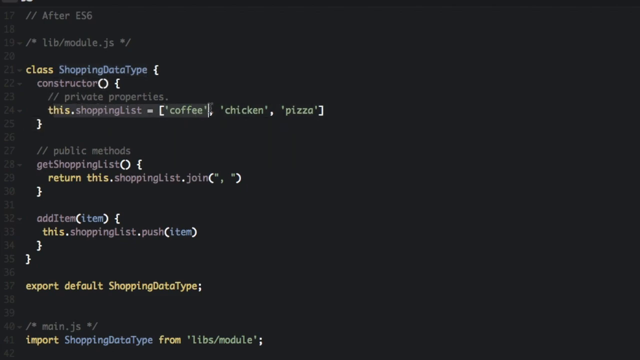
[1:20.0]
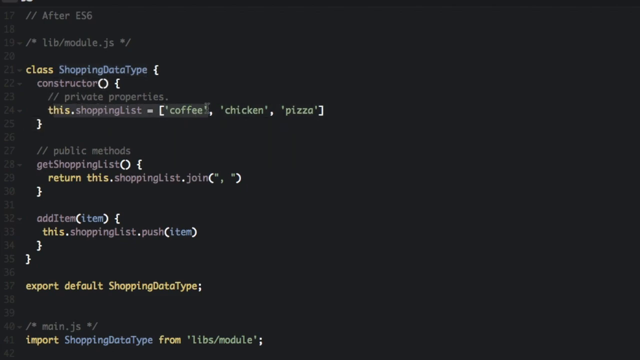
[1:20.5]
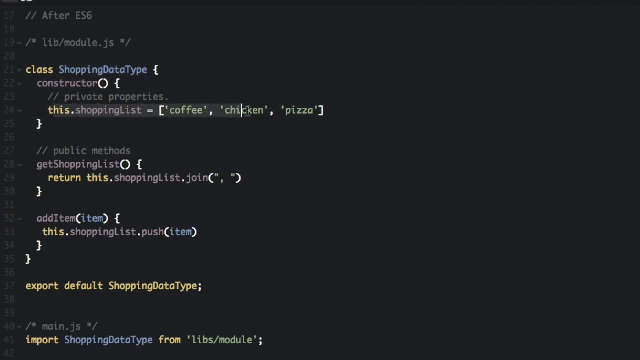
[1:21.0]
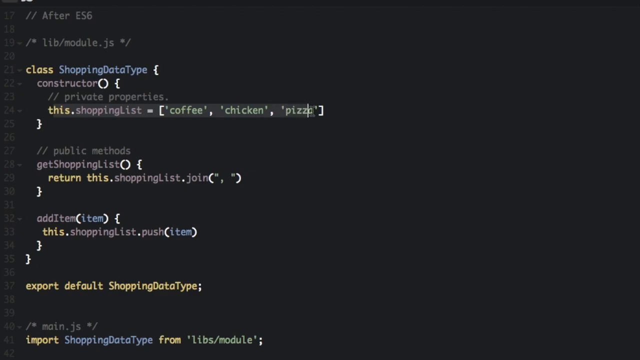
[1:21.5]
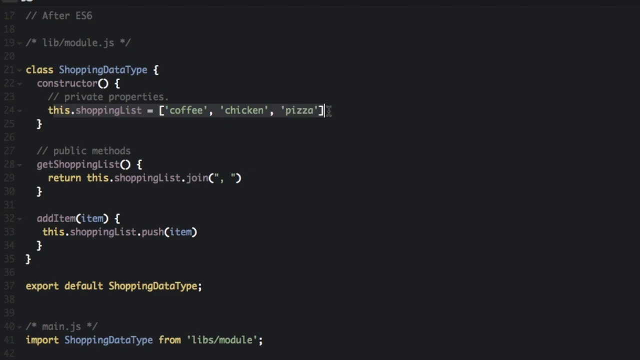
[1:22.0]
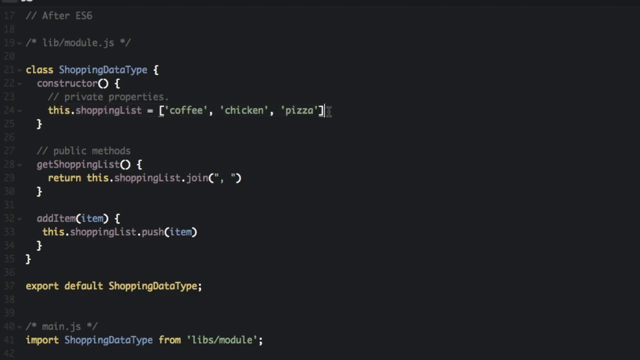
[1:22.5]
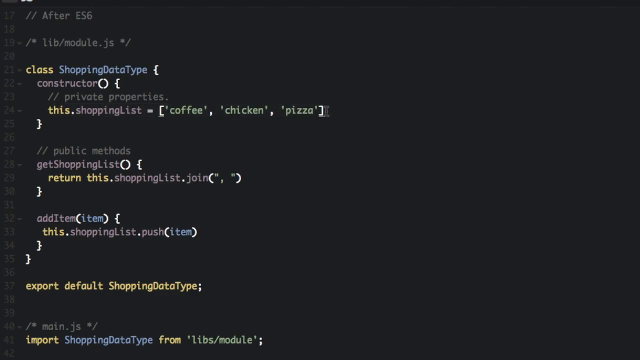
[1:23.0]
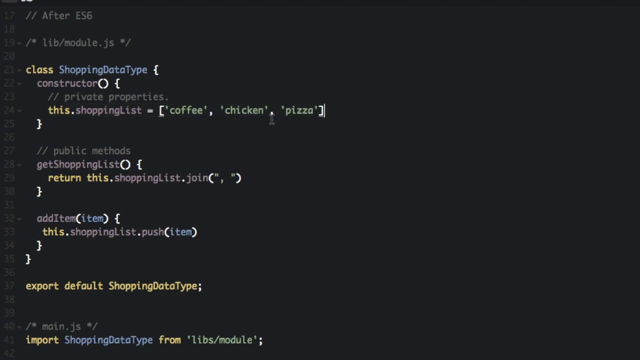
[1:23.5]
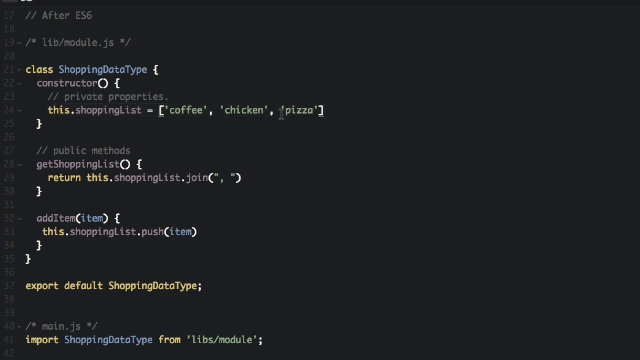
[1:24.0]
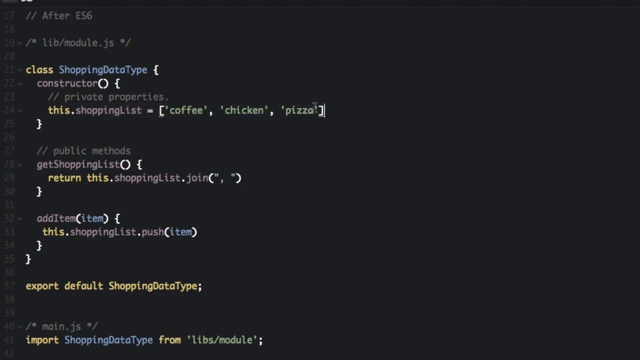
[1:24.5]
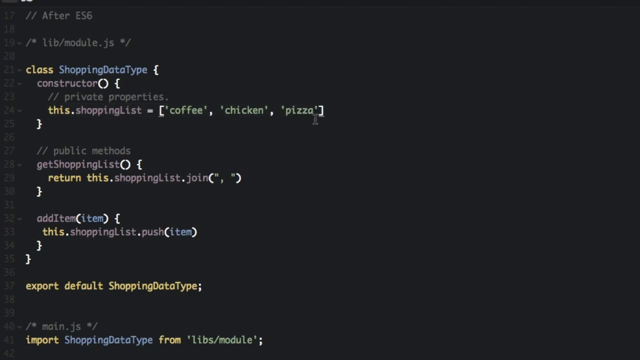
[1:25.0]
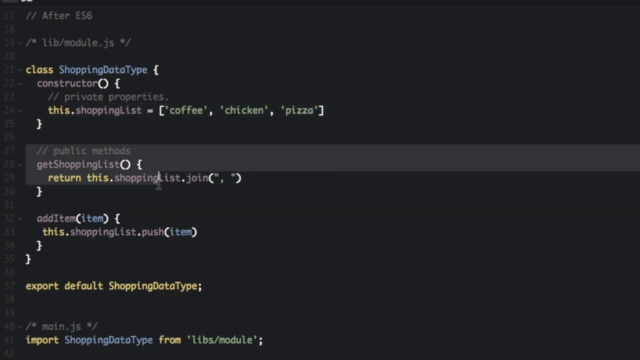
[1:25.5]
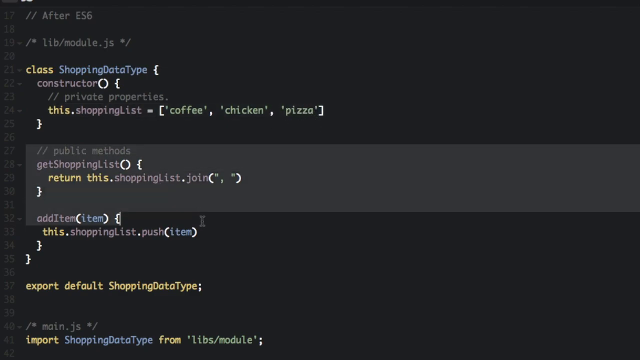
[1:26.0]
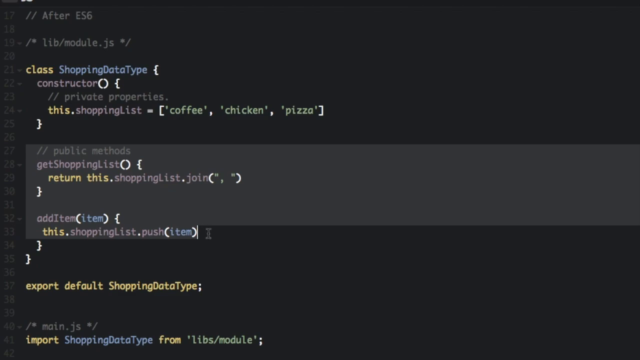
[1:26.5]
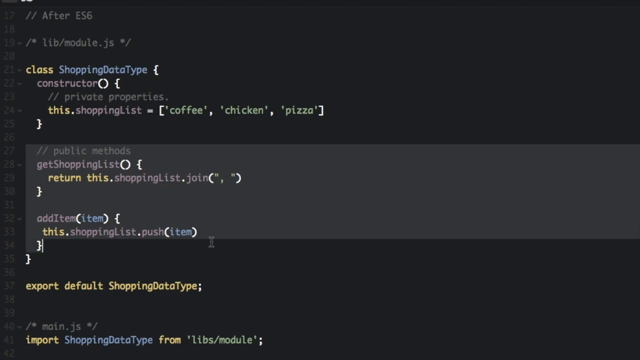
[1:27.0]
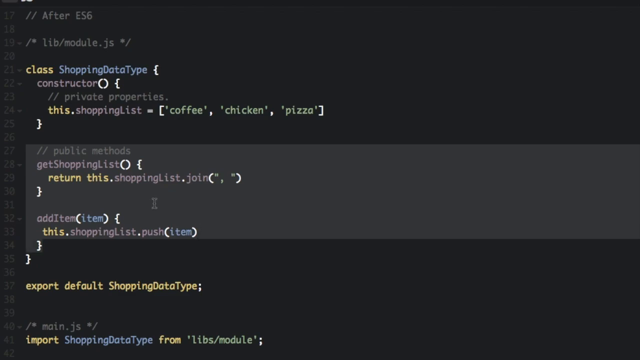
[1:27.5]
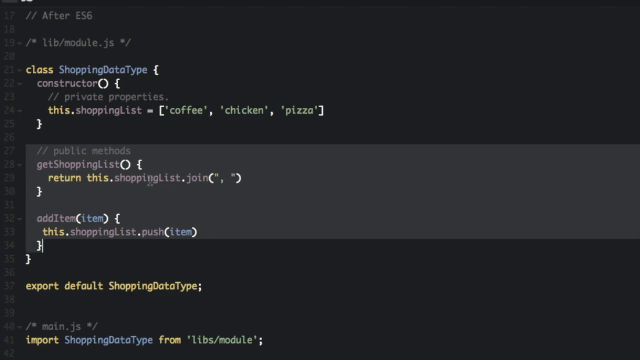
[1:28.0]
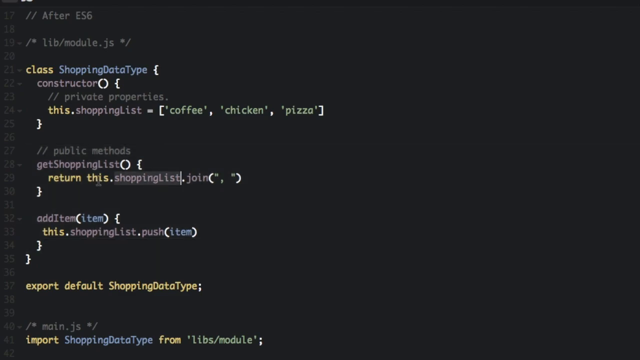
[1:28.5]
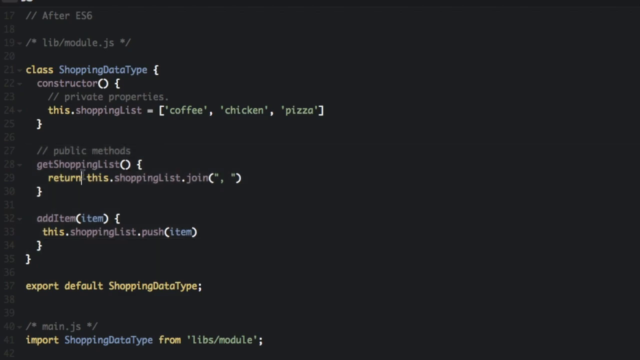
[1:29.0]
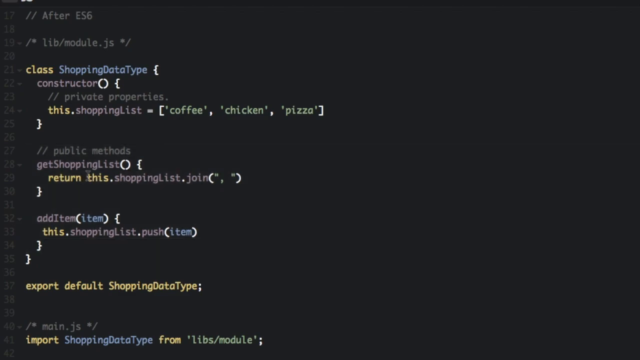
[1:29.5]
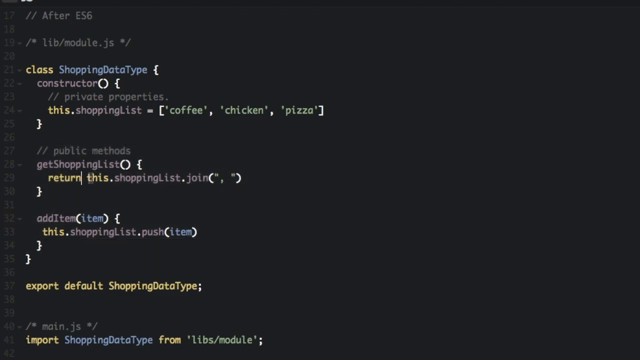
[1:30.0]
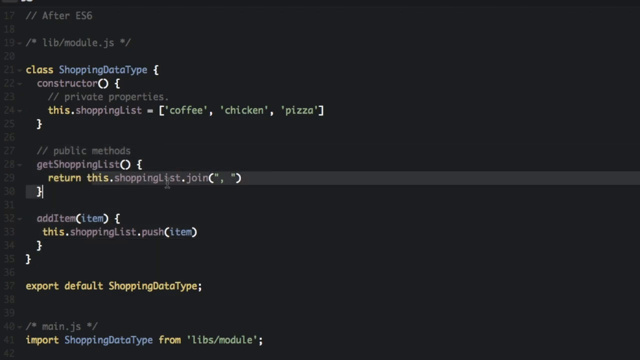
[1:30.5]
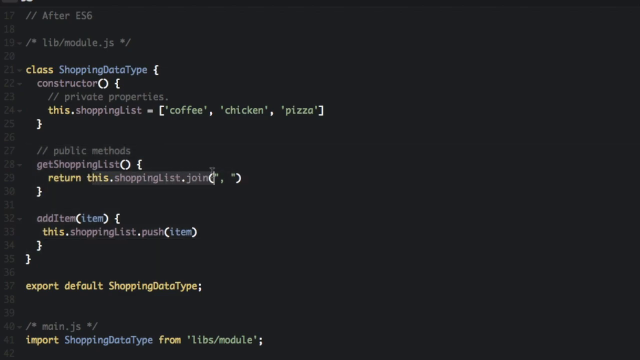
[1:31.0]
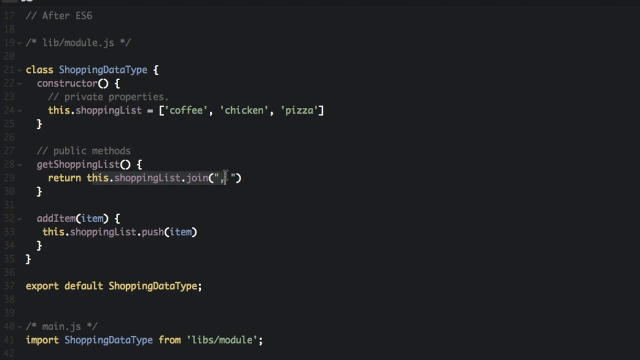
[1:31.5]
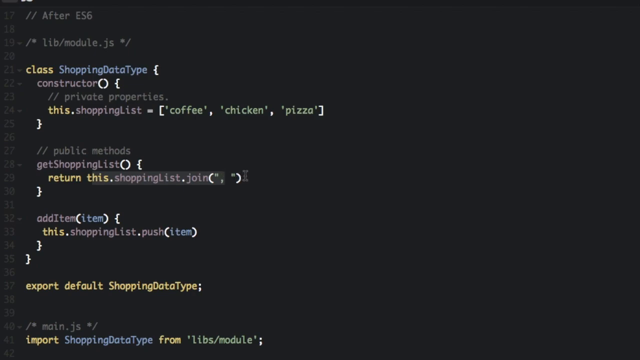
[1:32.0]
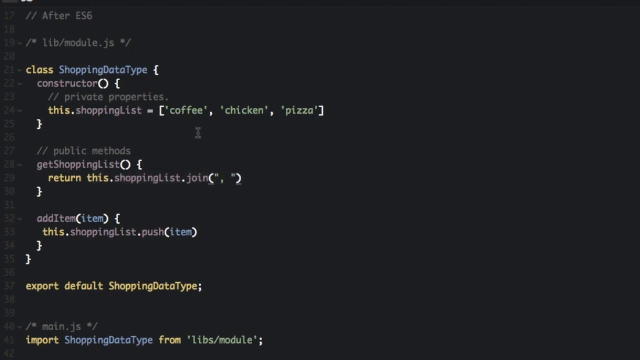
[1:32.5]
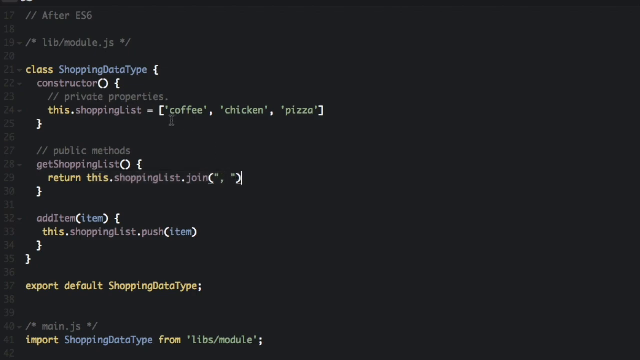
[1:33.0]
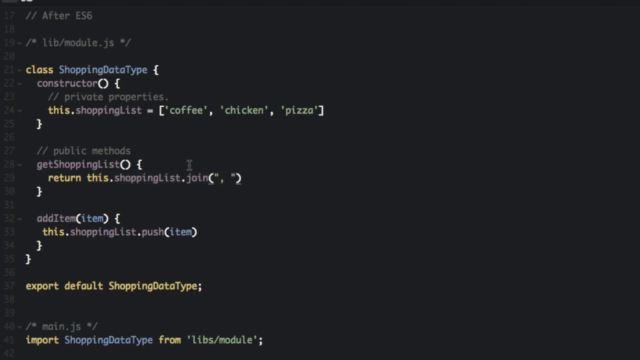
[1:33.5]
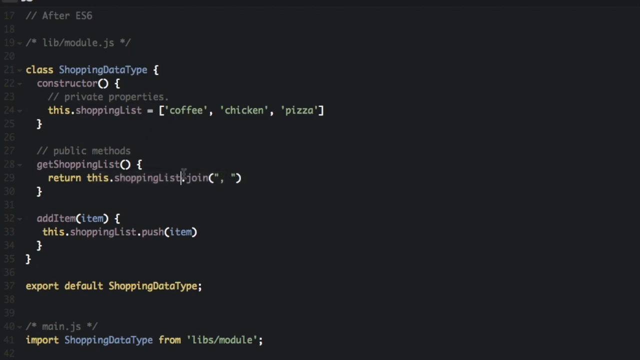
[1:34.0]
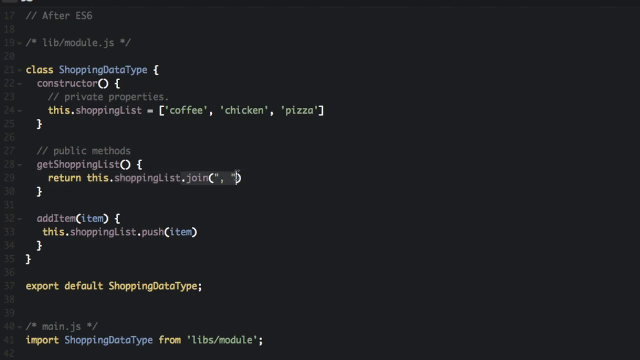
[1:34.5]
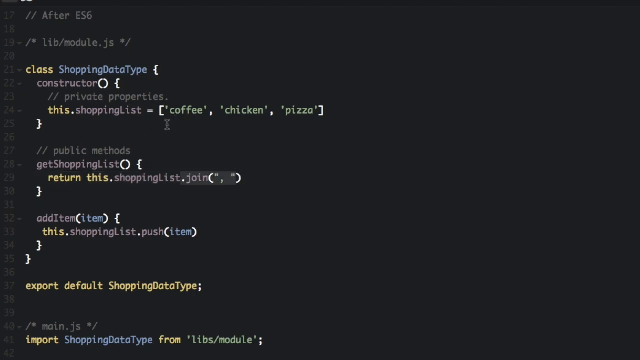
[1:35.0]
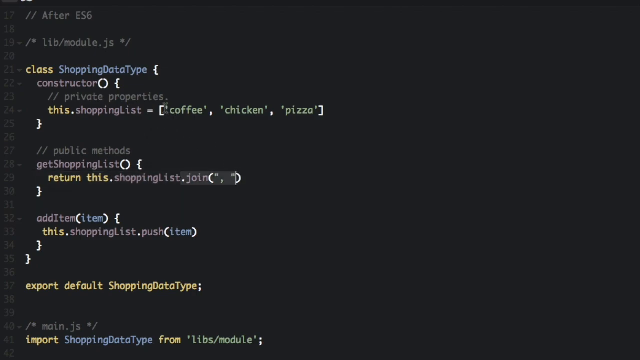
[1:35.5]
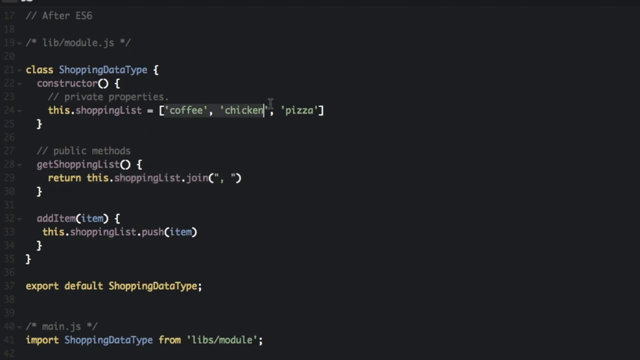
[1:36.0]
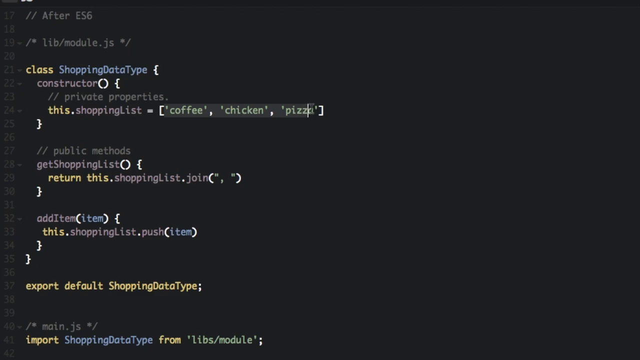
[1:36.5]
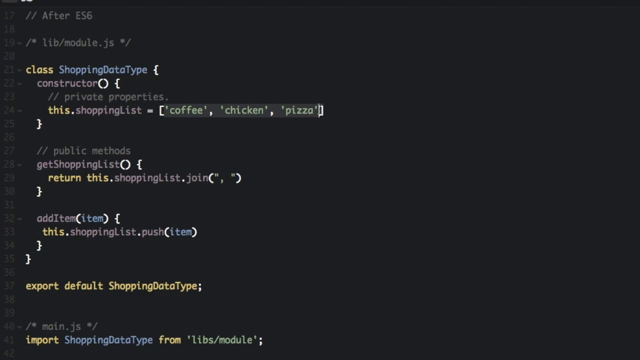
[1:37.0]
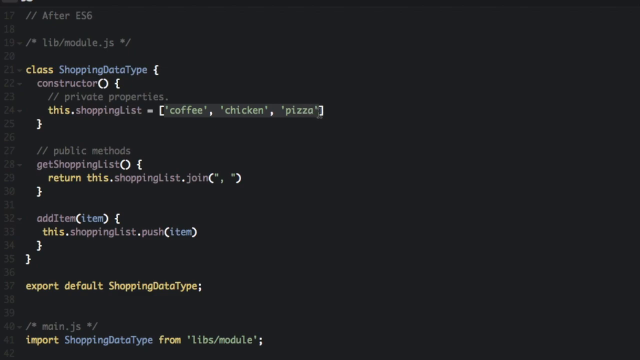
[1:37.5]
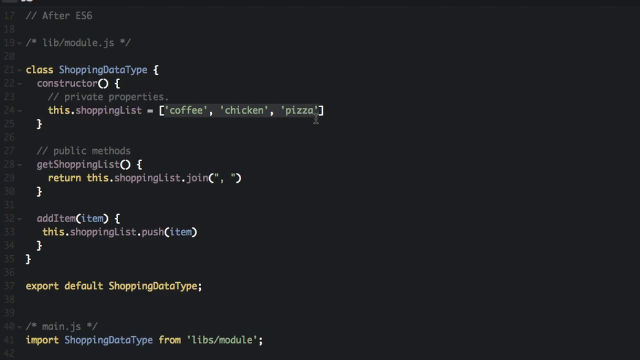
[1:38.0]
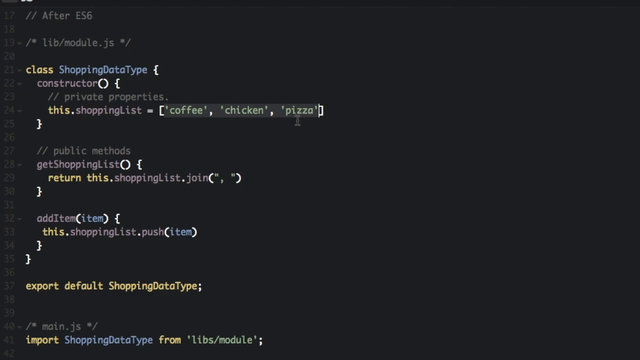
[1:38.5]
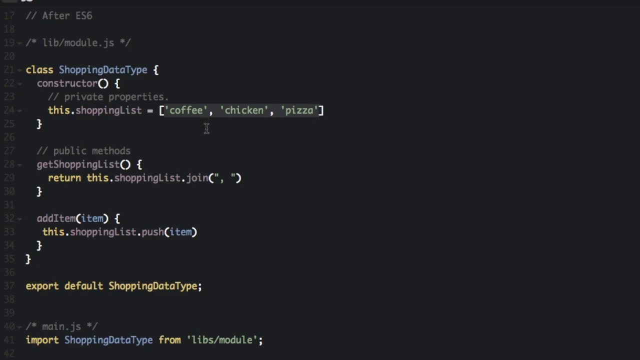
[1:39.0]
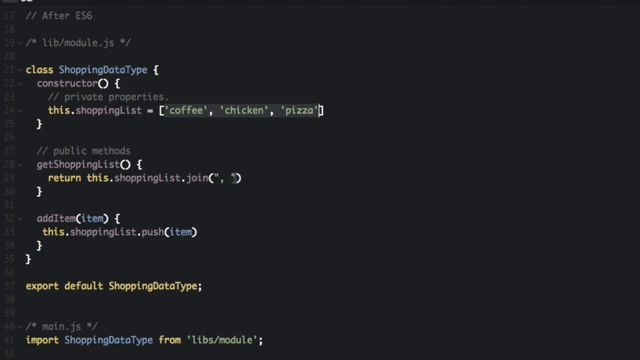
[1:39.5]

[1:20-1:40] Line 22 has the word "constructor" in a brownish grayish font in lowercase letters, followed by an open and a close parenthesis back to back that almost form a closed circle, then a space and another open colon/parenthesis-type mark. Line 23 begins with maybe about three or four spaces, then "// private properties.", all in gray and lowercase. On line 24, the word "this" is in lowercase yellow letters, followed by a white dot, then "shoppingList" with only the L capitalized, in a brownish gray color. After a space comes a white dash, then another space, another open white colon/parenthesis mark, and the words "coffee, chicken, pizza", followed by a white close parenthesis.